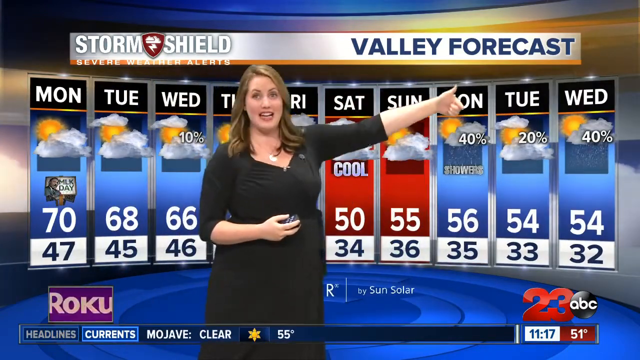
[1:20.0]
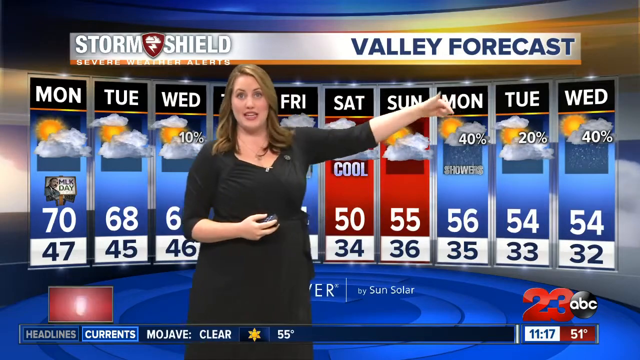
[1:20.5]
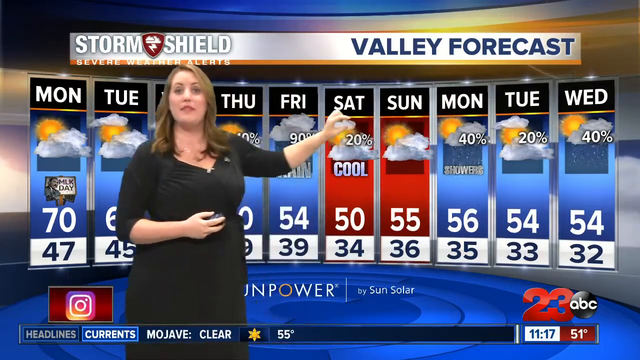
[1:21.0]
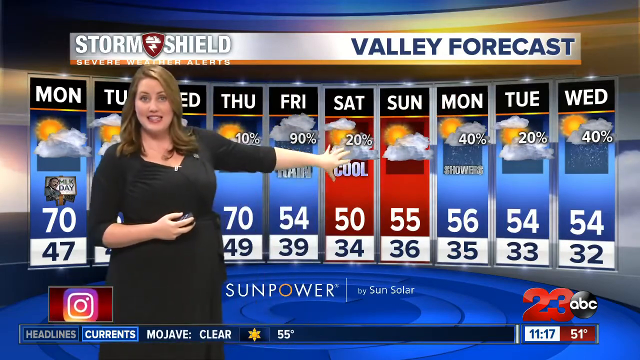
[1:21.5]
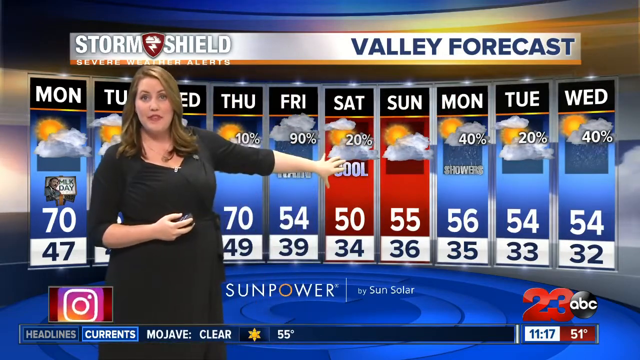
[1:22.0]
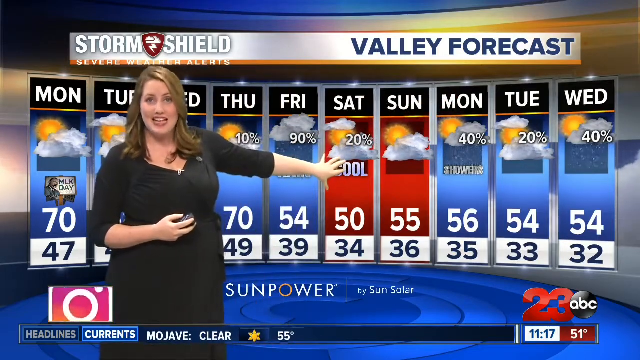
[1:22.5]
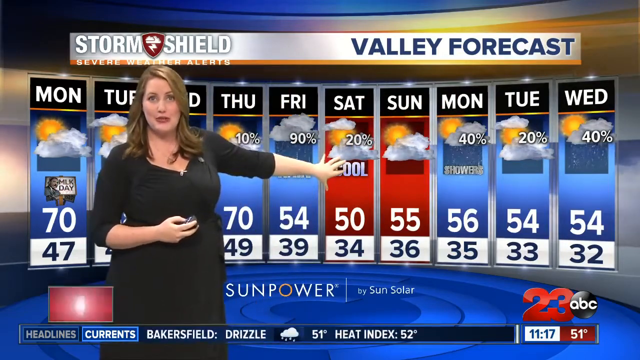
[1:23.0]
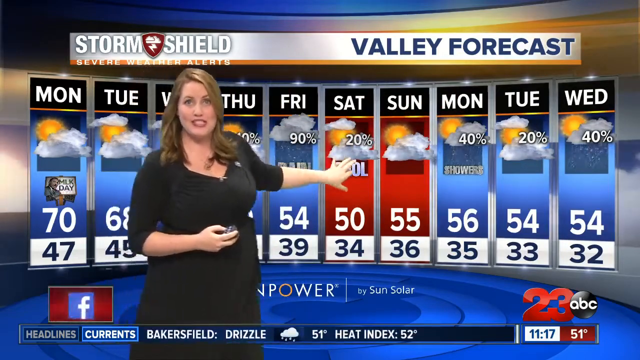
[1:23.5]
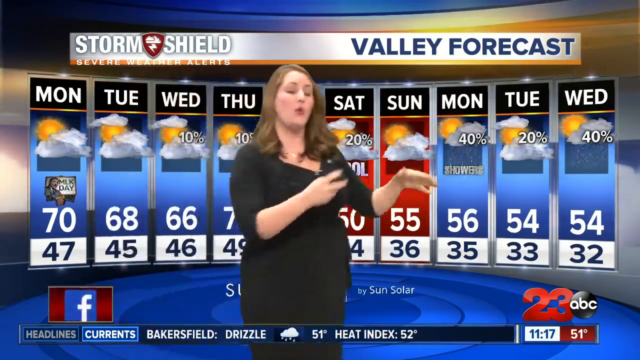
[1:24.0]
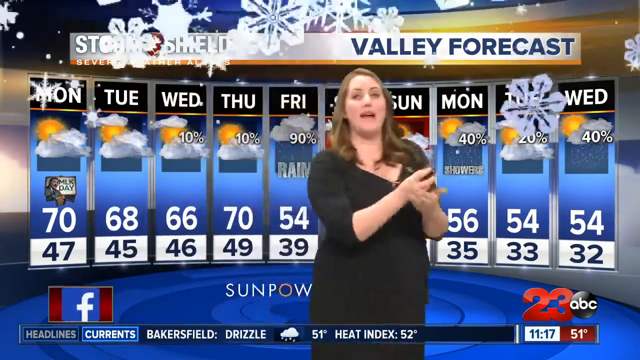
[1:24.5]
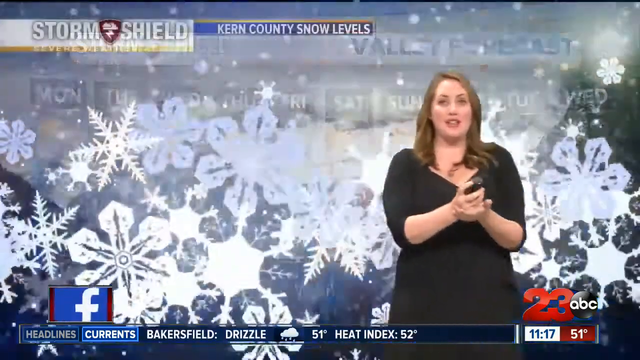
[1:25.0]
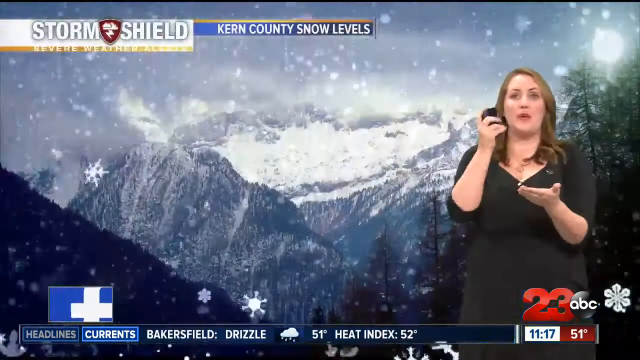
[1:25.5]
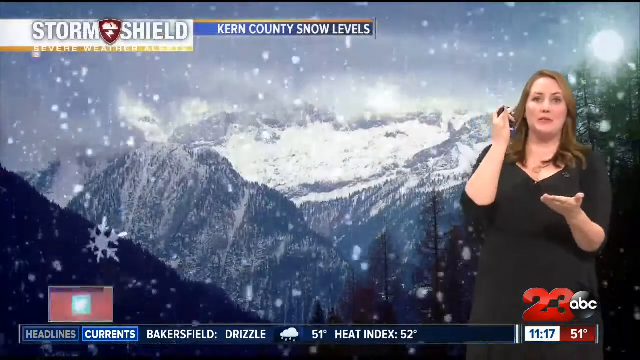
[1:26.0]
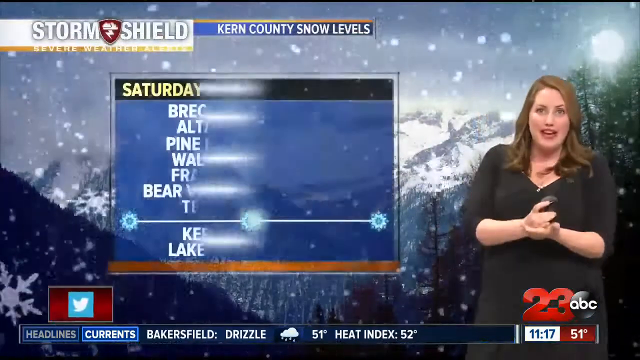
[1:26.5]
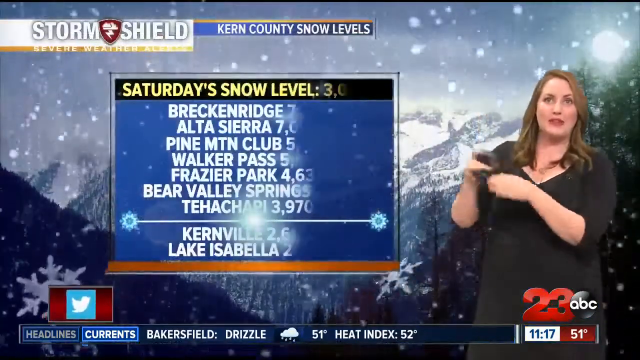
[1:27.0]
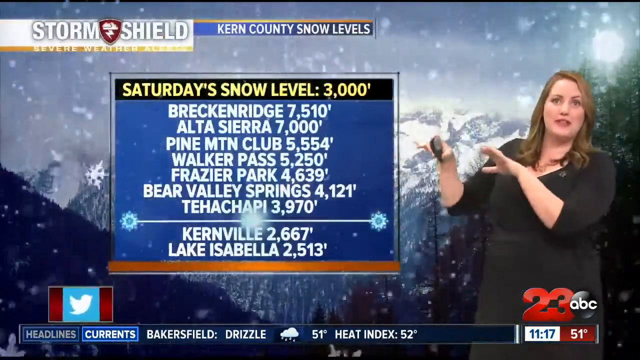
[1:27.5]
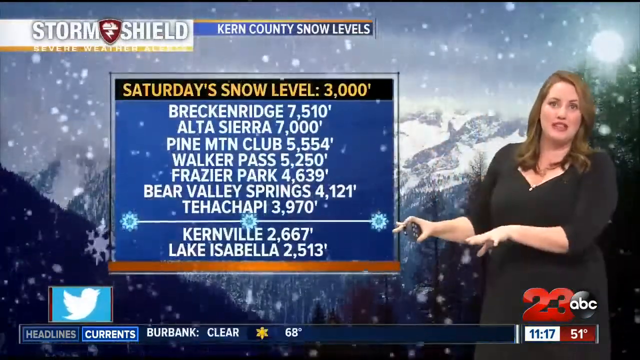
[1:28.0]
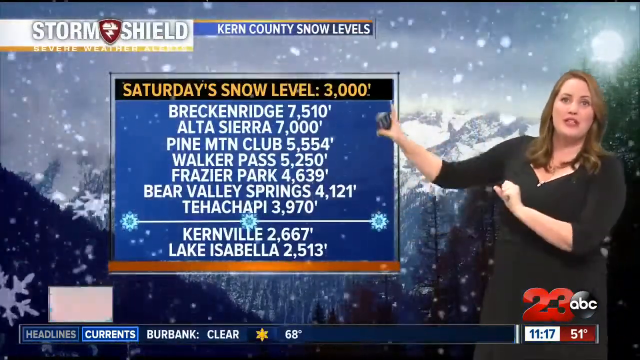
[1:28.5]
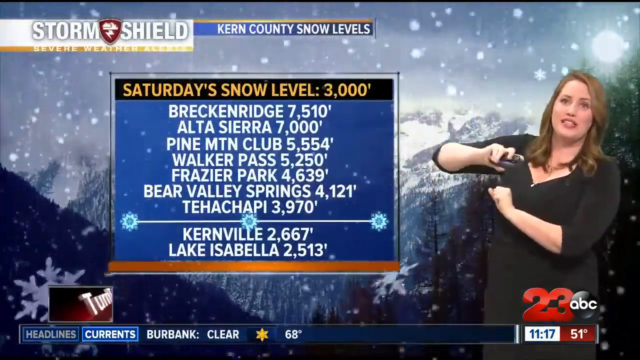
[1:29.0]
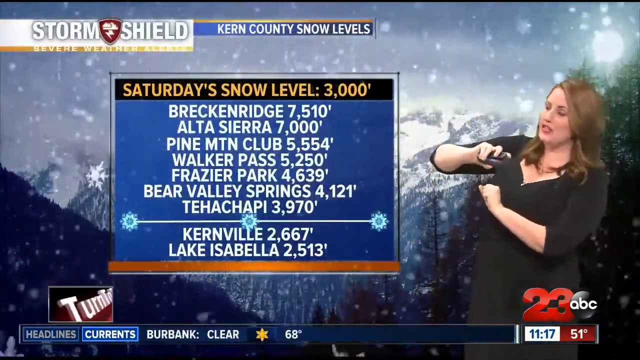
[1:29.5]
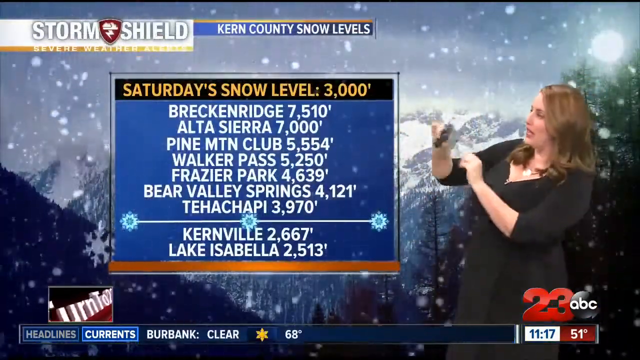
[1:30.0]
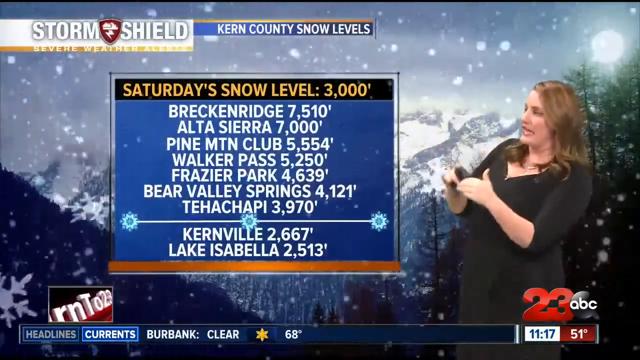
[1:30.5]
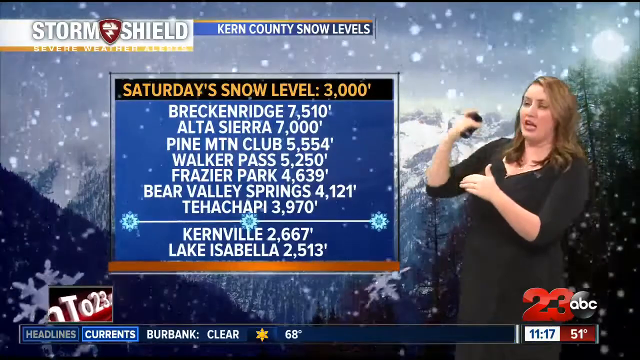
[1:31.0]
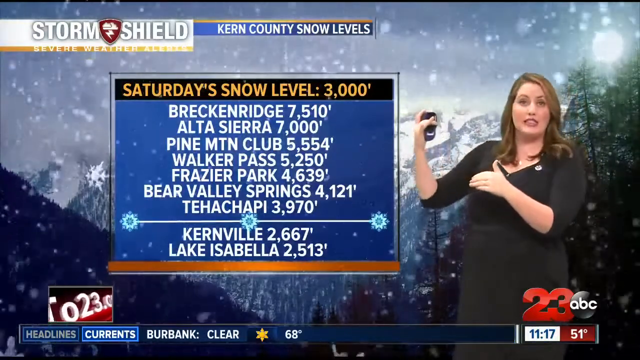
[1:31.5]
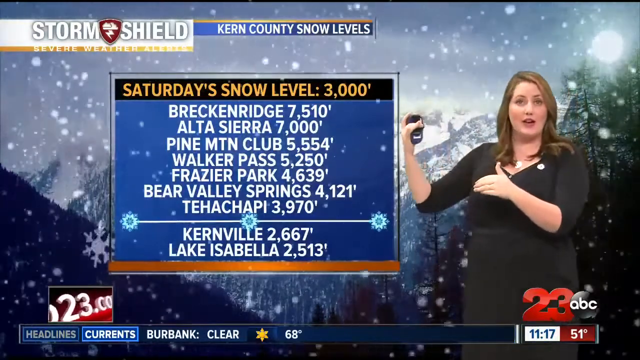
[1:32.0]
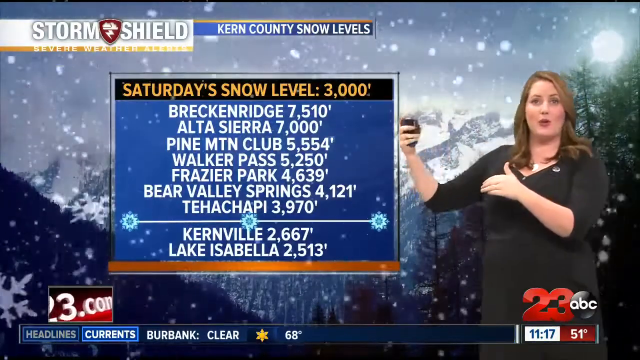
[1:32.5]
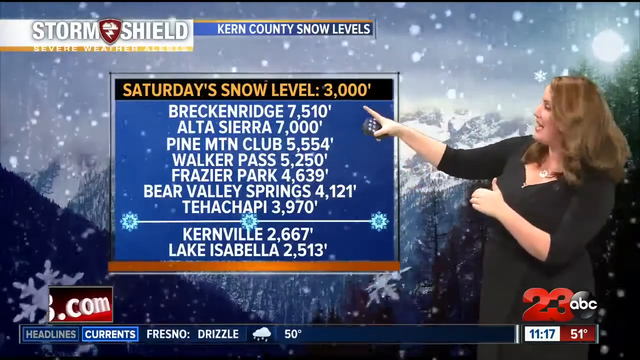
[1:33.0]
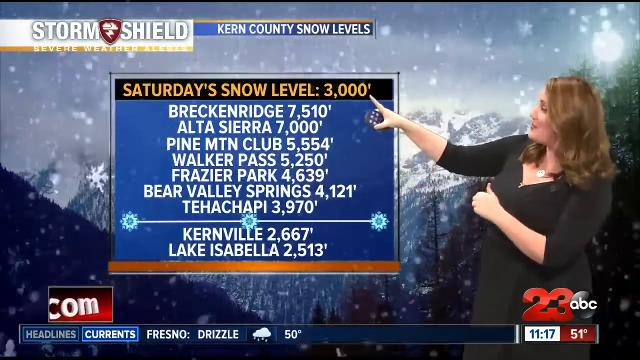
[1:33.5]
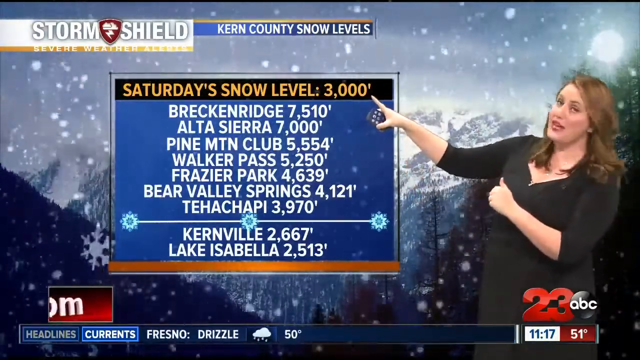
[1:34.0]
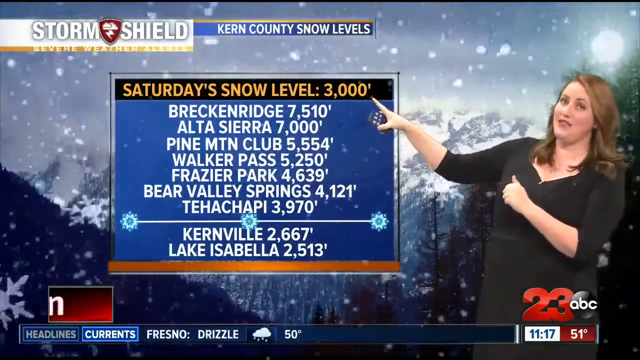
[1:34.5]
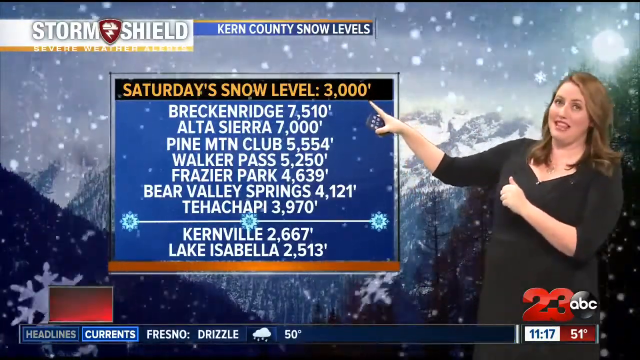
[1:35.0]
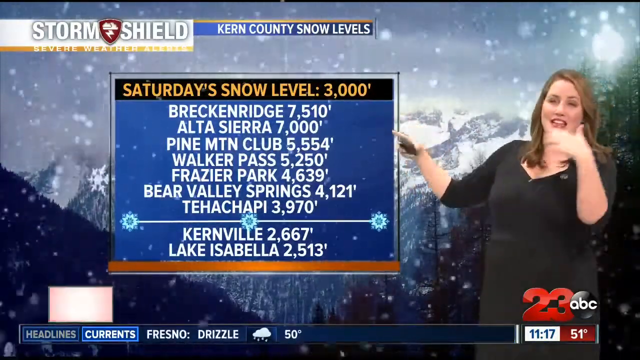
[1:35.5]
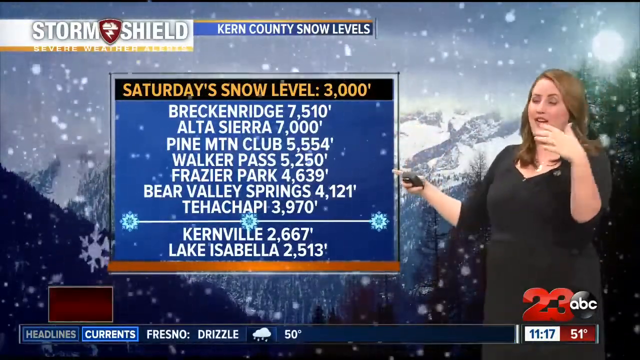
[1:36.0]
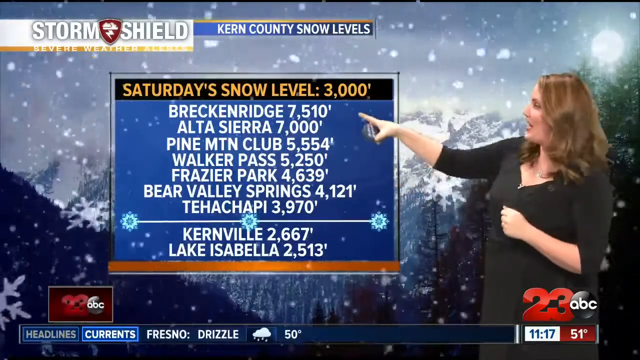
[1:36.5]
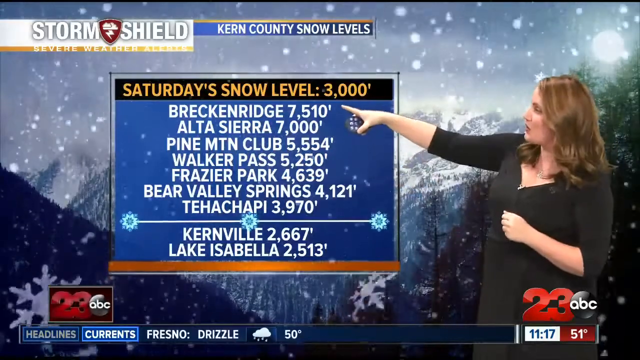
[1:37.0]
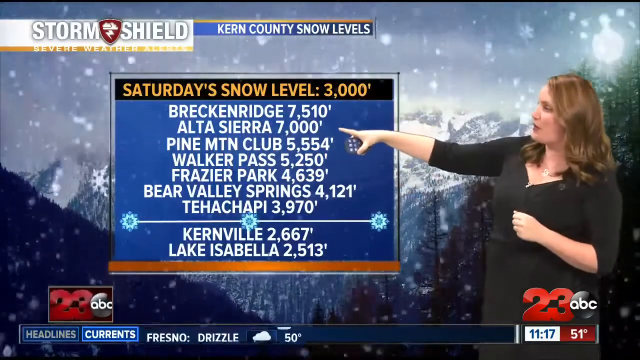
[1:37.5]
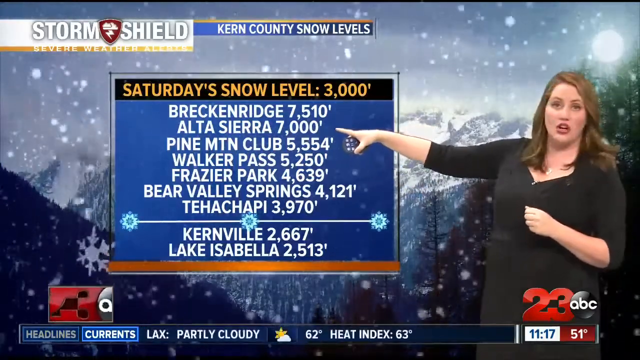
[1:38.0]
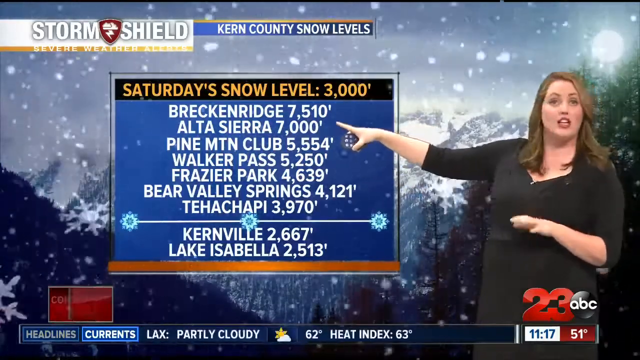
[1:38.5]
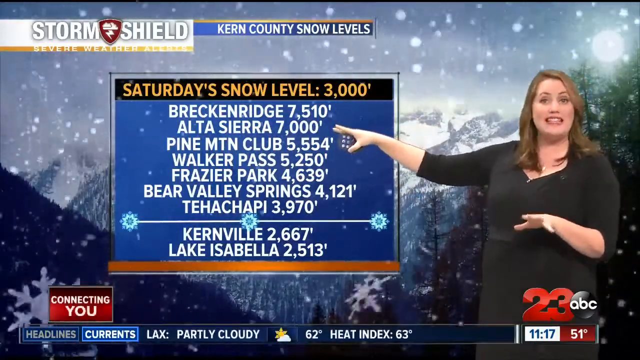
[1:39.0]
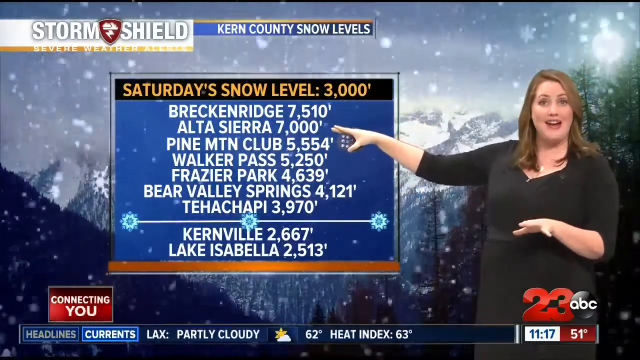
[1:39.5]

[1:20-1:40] The ABC News Channel 23 Storm Shield weather alert shows the valley forecast for the Bakersfield area, a 10-day report with mostly sunny days with some clouds and lows as low as 32 degrees. The meteorologist then shows snow in Kern County, with snow alerts listing Breckenridge, Alta Sierra, Pine Mountain, Walker Pass, Fraser Park, Bear Valley Springs, Tehachapi, Kernville, and Lake Isabella. Snow levels are shown: the highest is 7.5 in Breckenridge, Alta Sierra shows 7,000, and Fraser Park shows 4.6.